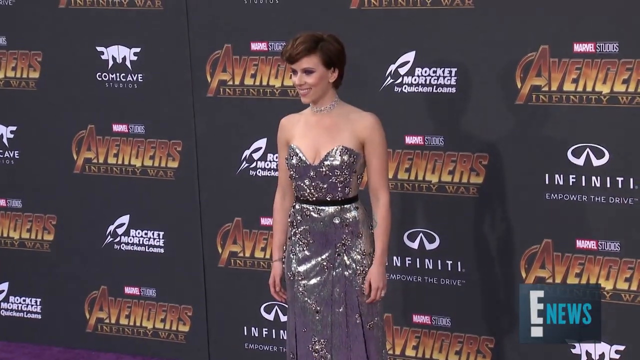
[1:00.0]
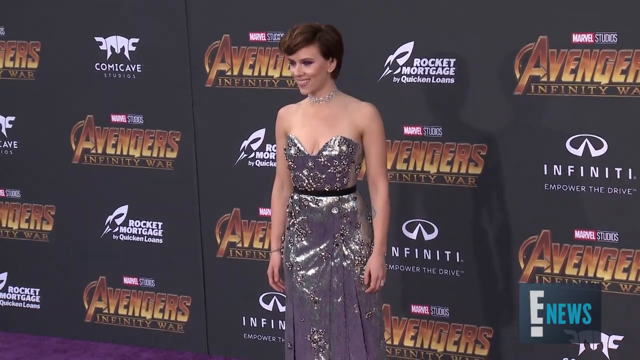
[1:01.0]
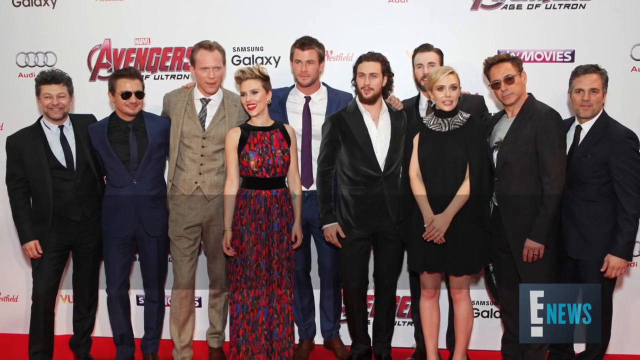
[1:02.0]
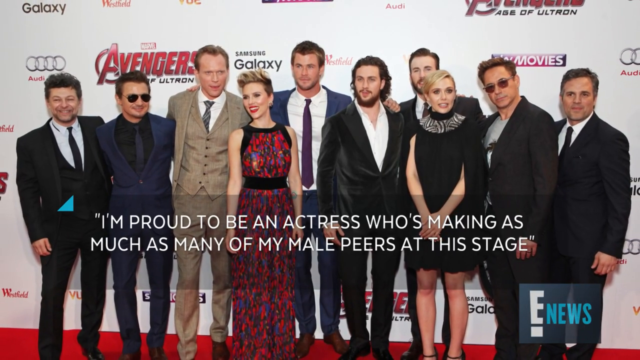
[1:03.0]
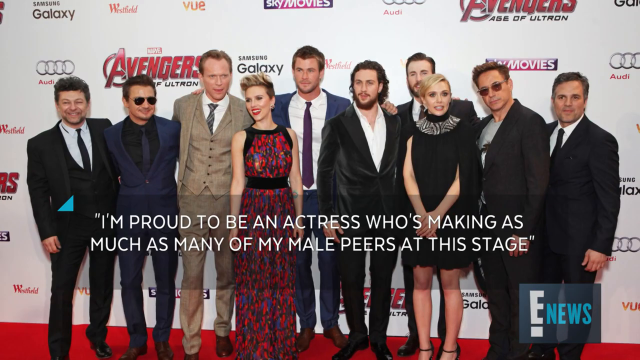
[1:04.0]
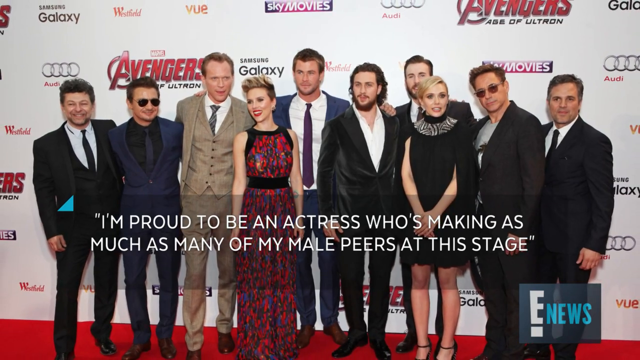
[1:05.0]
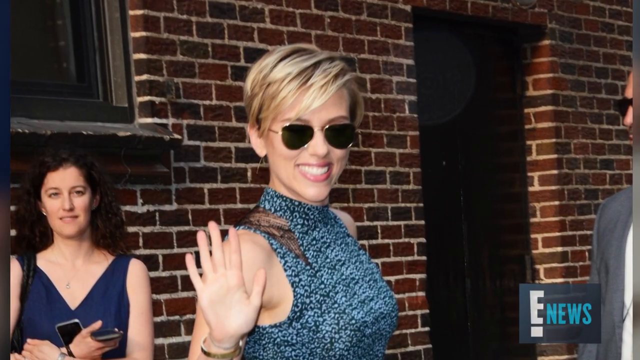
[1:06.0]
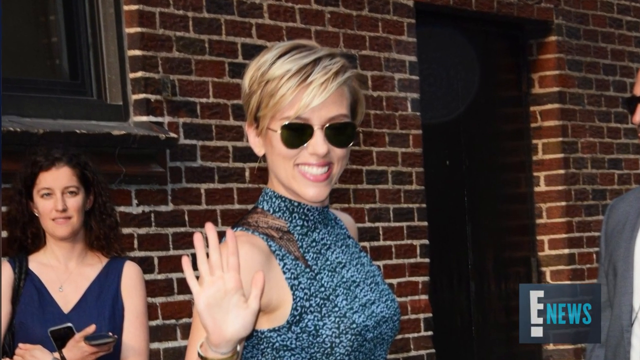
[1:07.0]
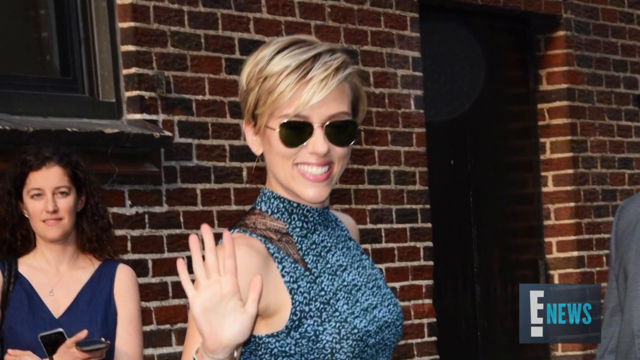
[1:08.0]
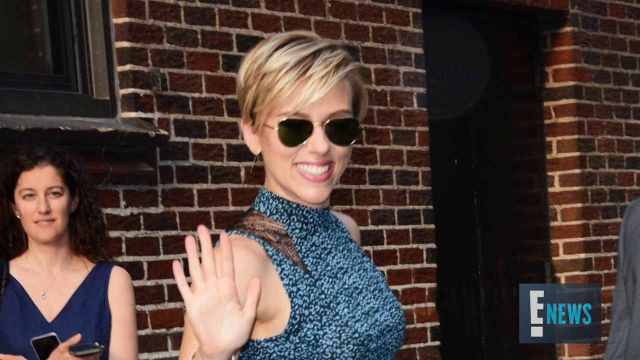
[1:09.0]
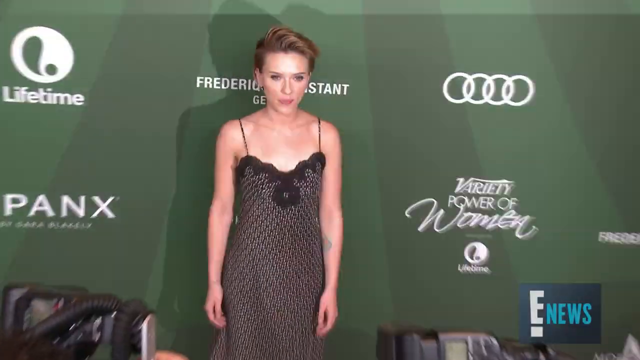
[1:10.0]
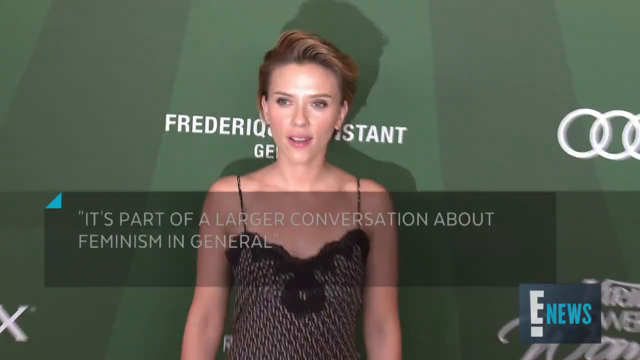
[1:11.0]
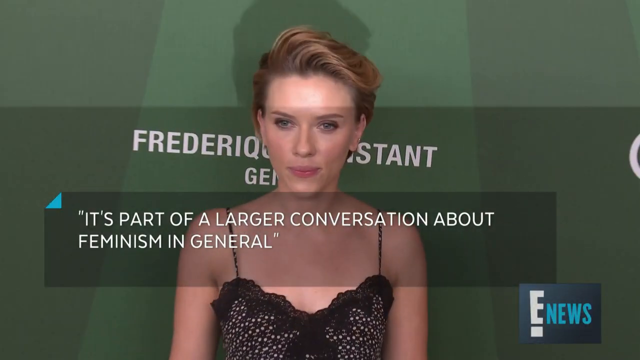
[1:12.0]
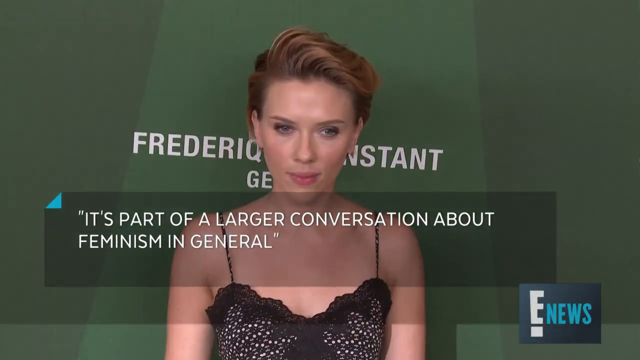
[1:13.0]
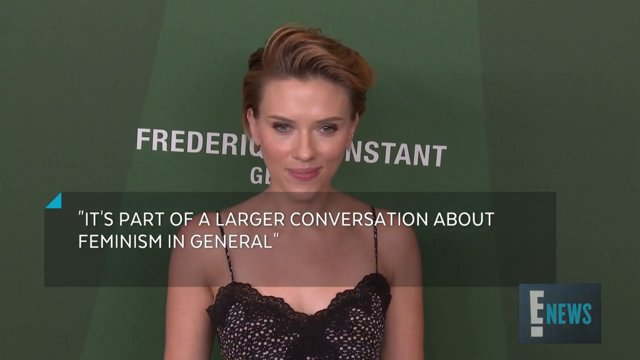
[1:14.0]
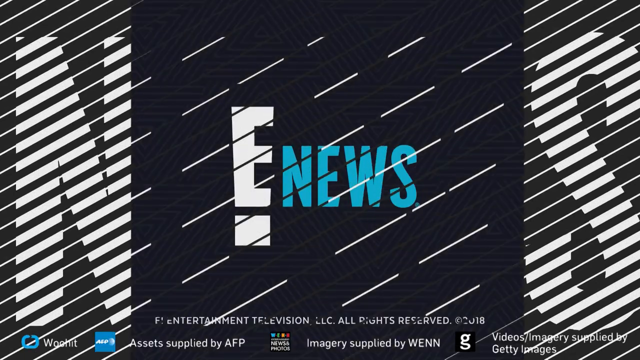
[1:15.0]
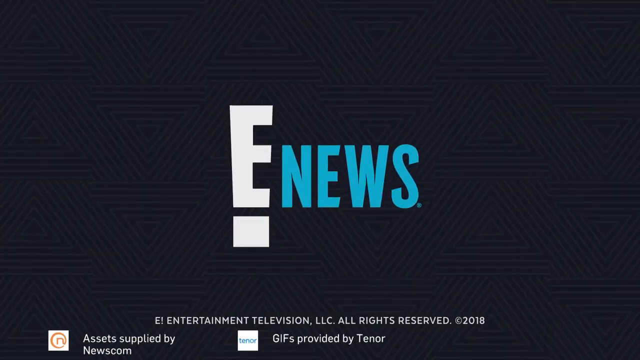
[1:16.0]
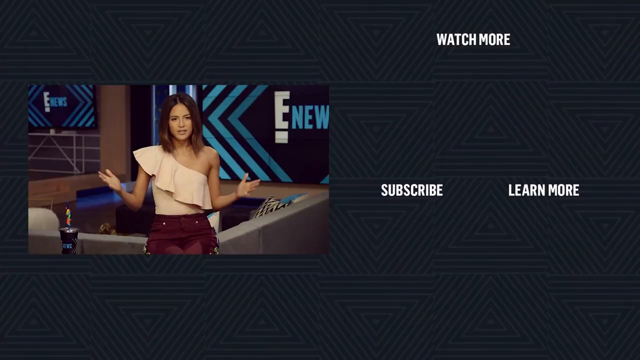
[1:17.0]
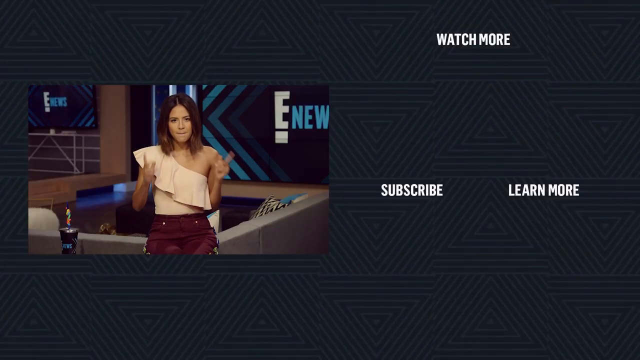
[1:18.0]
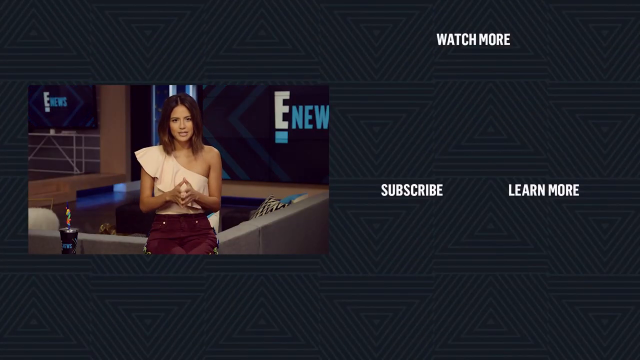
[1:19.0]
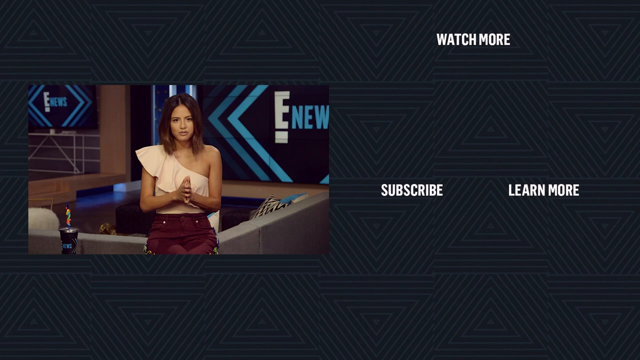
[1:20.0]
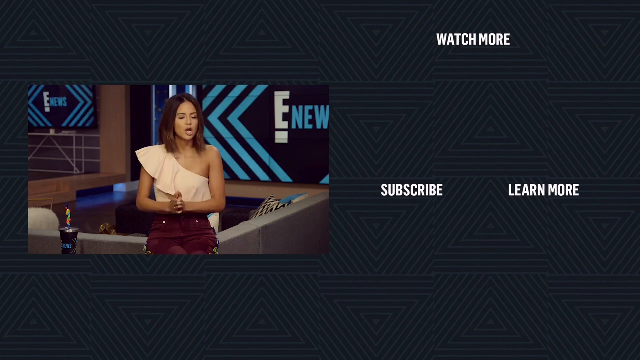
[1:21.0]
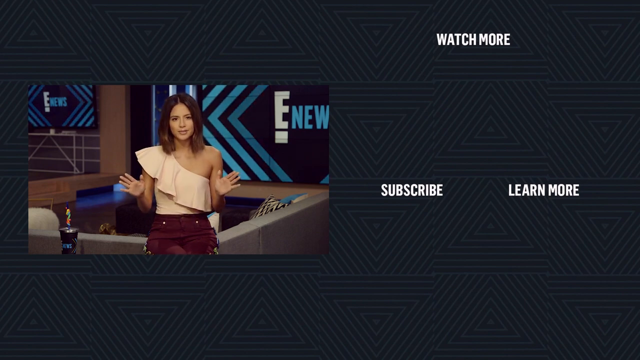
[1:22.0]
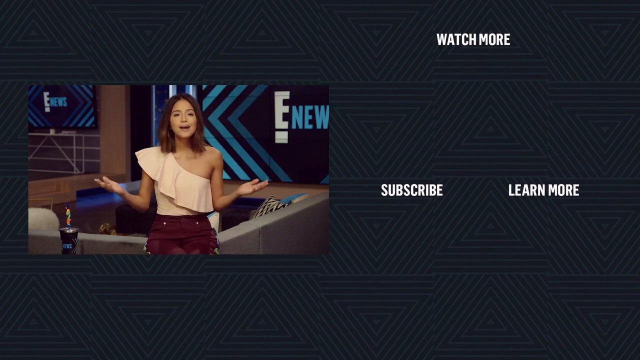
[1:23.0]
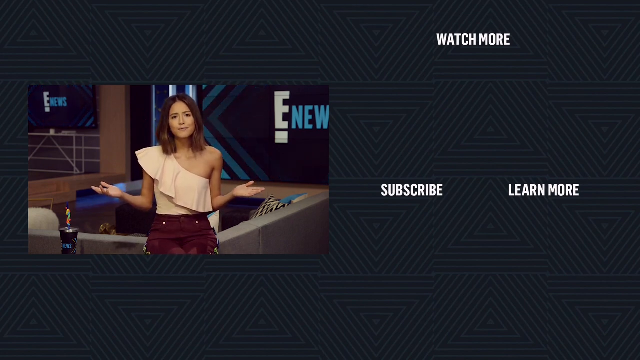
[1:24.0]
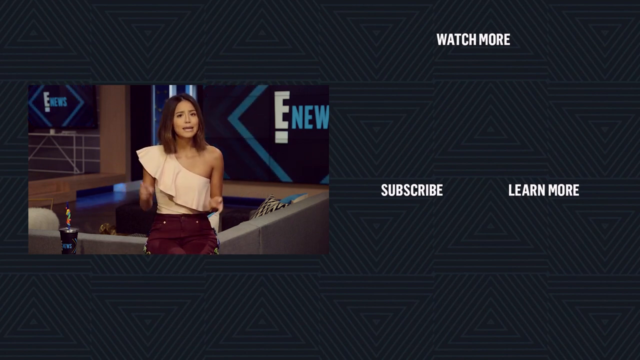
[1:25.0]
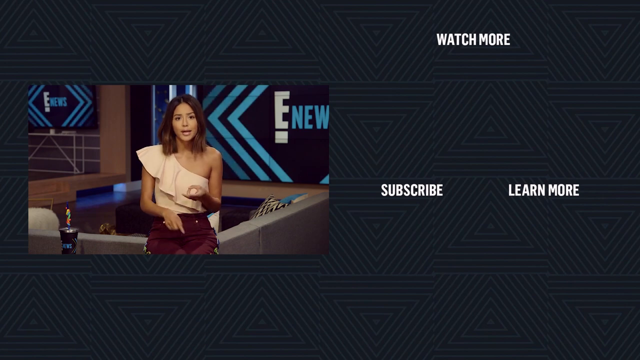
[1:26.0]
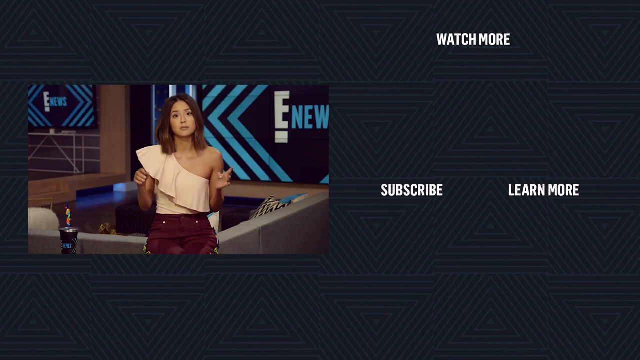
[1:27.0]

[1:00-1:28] A video shows Scarlett Johansson in a silver dress with a black belt, her arms stretched down beside her. Behind her is a backsplash of Avengers Infinity War in gold and an image of Rocket Mortgage by Quick Loans. The image changes to her cast and crew members, 10 people standing from left to right: a man in a black suit, a man in a navy blue suit, a man in a beige suit, a woman in a long, brightly colored red, blue and purple dress, a man in a navy blue suit, a man in a black felt suit, a woman with blonde hair in a black dress, another man in a suit with a grey t-shirt, and to the right of him a man in a black suit with a white shirt and black tie. A text box appears reading "I'm proud to be an actress who's making as much money as many of my peers at this stage." Next is a still shot of Scarlett Johansson holding her hand, wearing a blue dress and sunglasses. Another shot shows her against a green background with her hair slicked back, wearing a black dress, as the camera slowly zooms onto her and cameras flash in the background. A text box appears reading "it's part of a larger conversation about feminism in general". The video then changes to an E-News logo: the white "e" gives the appearance of an exclamation point, "news" is written in blue, and the background has a textured pattern. Finally, a news reporter stands next to a couch, gesturing expressively with her hands as if discussing something, then tapping her fingers together as if listing something. To the right, text reads "watch more, subscribe, learn more".